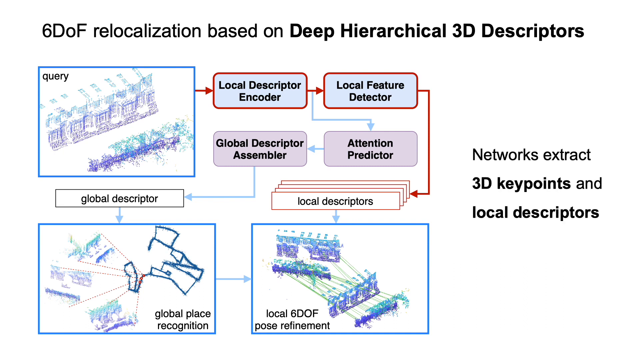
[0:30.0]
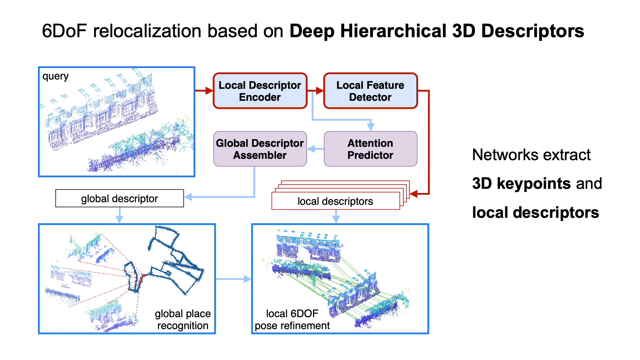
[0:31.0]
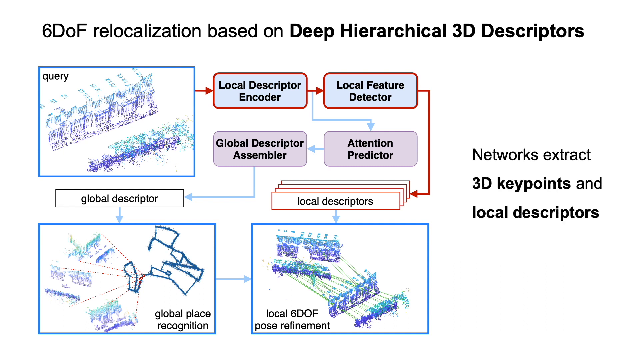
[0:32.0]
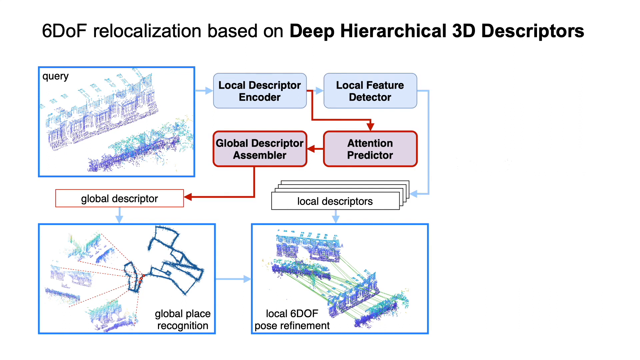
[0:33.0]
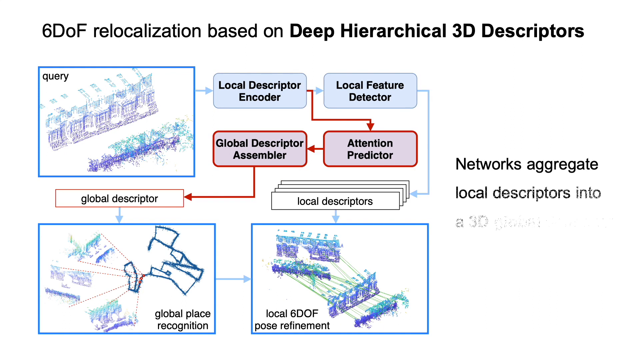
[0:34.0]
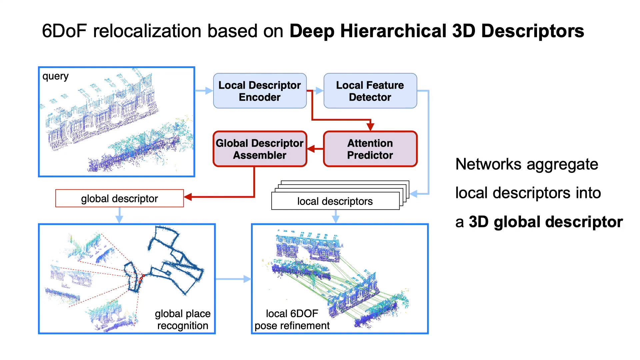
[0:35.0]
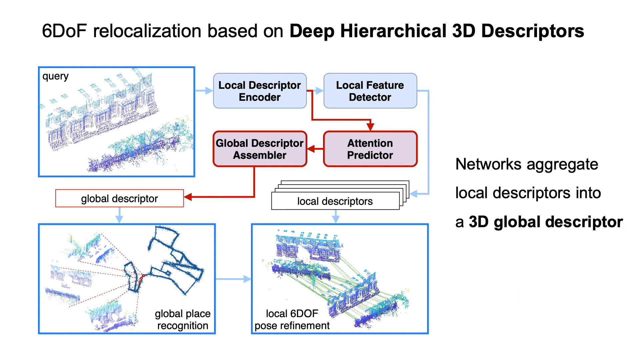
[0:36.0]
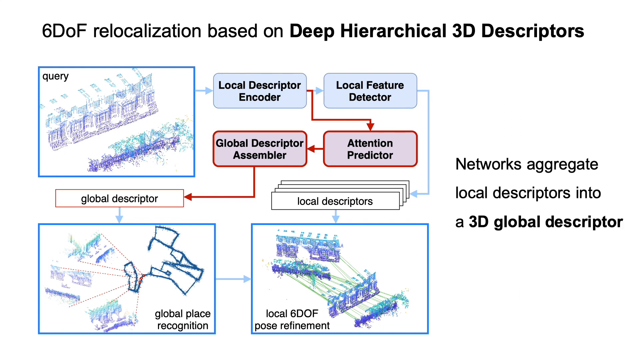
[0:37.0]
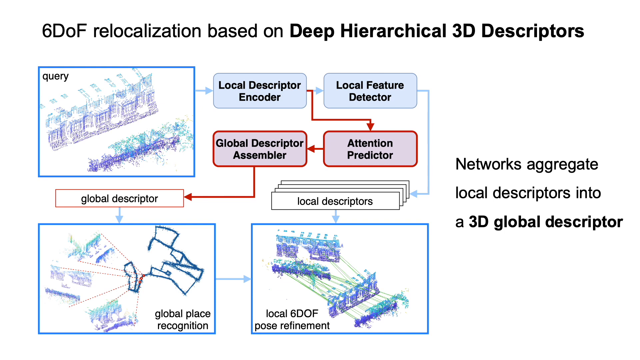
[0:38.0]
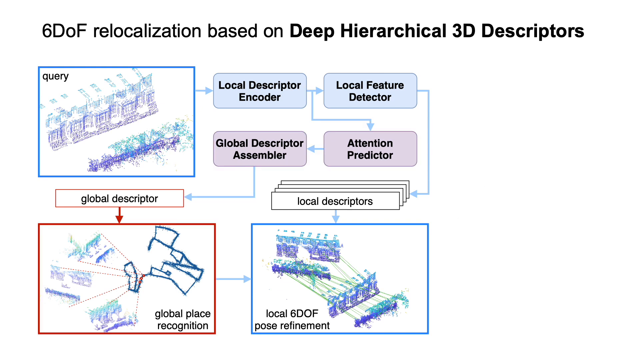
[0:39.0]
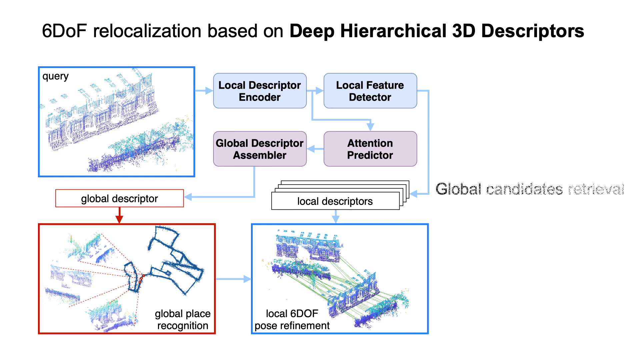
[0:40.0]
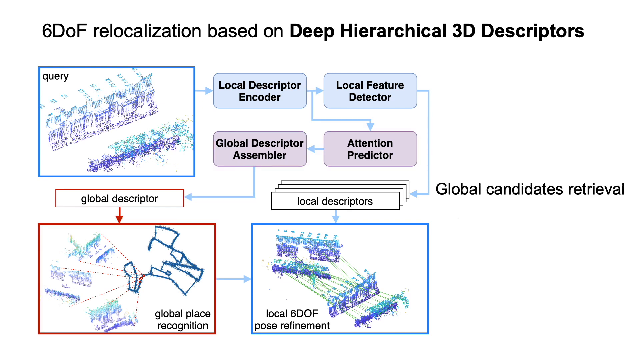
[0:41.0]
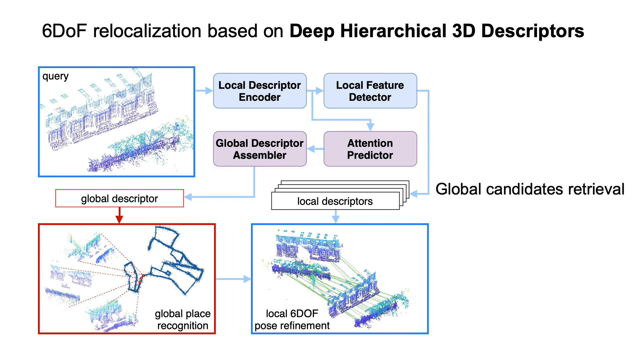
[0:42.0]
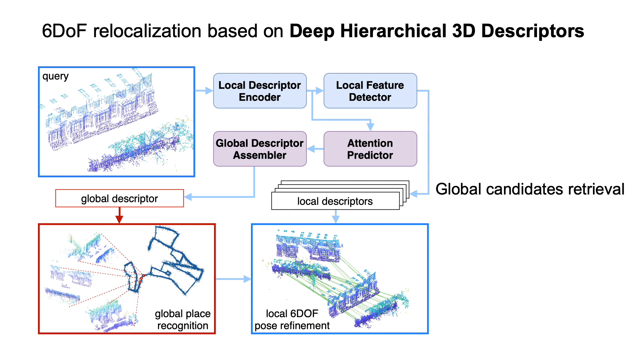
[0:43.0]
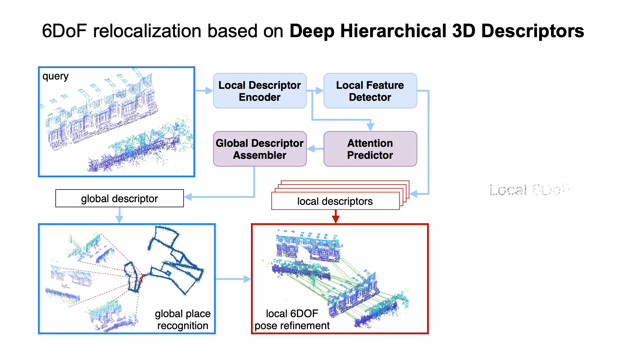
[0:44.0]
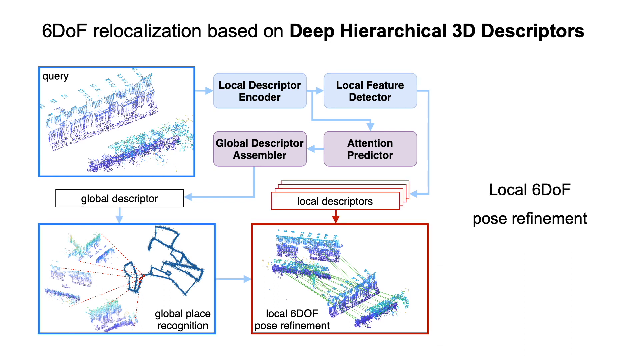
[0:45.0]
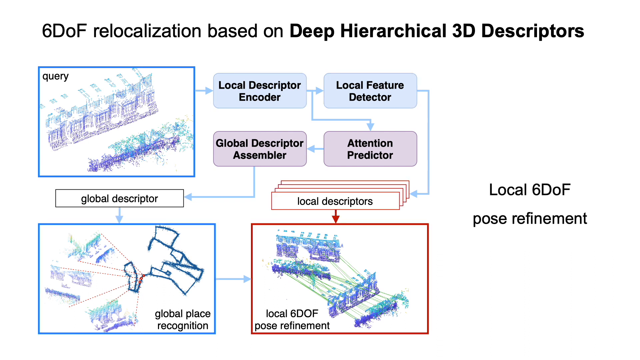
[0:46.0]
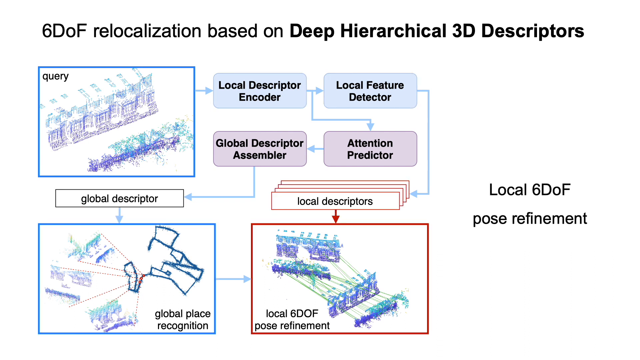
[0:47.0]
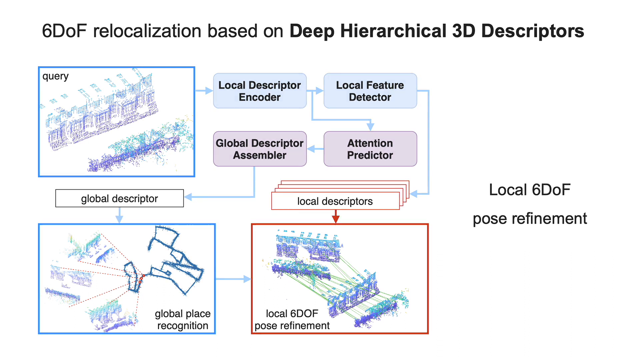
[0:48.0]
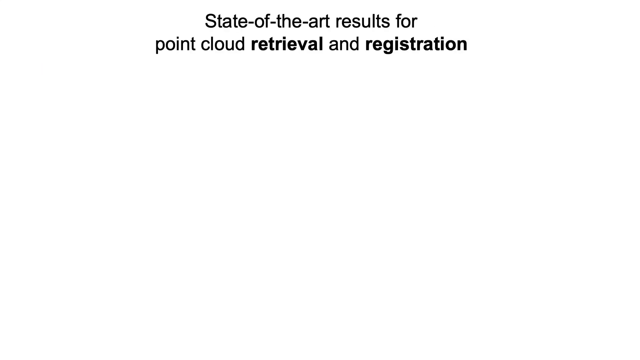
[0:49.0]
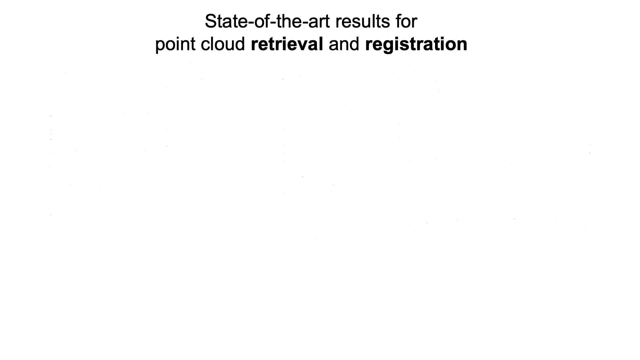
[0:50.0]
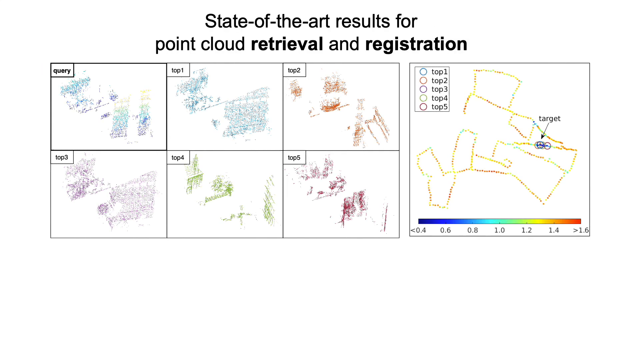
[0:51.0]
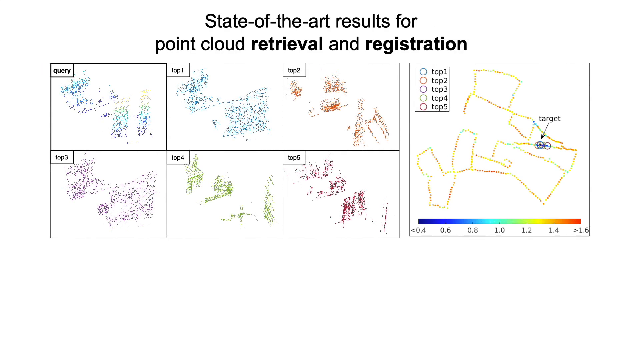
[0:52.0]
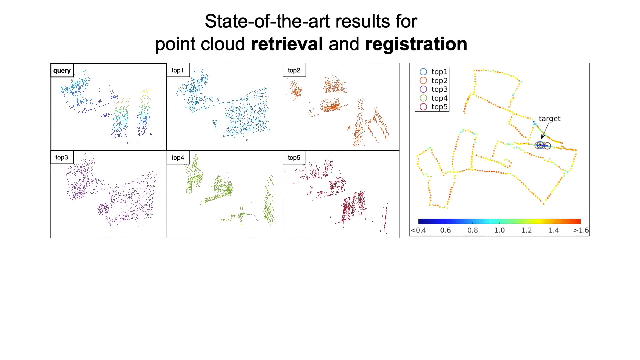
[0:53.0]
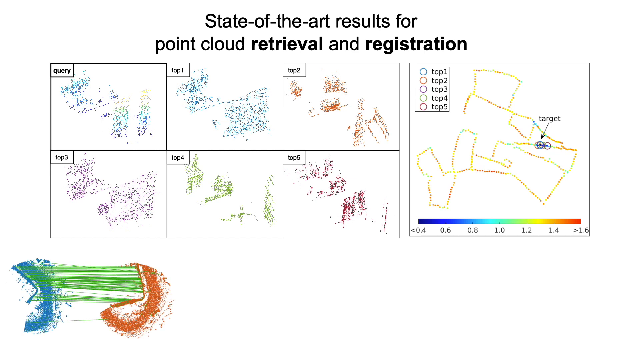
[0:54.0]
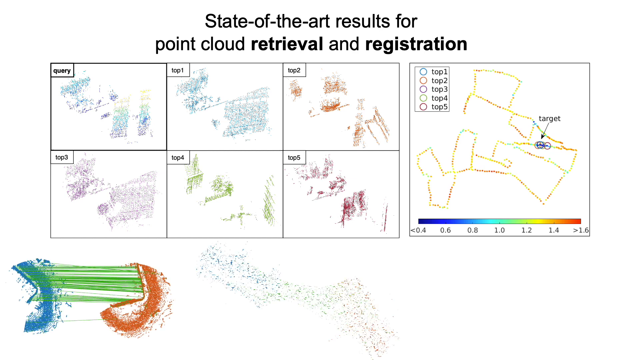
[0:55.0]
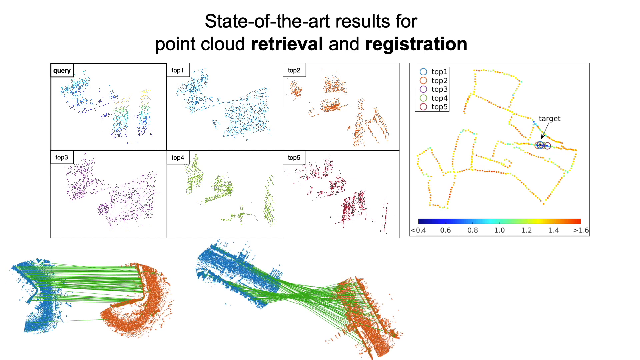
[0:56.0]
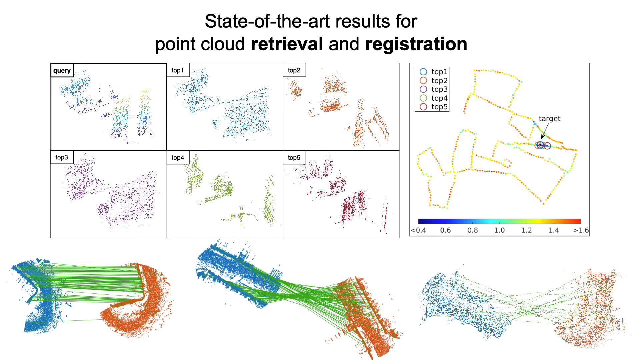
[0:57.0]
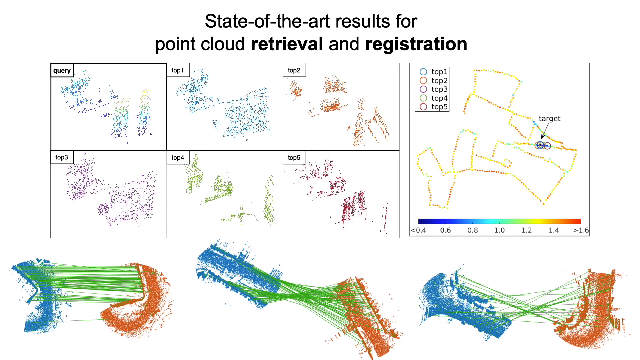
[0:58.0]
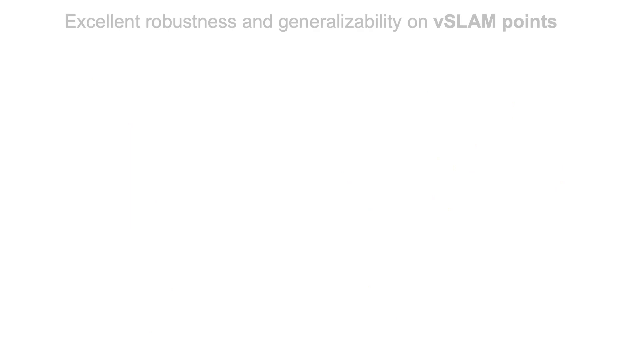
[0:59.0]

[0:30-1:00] The diagrams of 6DOF relocalization based on deep hierarchical 3D descriptors continue. A blue query box showing a diagram of a building has a red arrow to a local descriptor box, which has a red arrow to a local feature detector box; that box has a red arrow to a local descriptor box, which has a blue arrow to a final local DOF pose refinement box. The attention predictor box has a blue arrow to the global descriptor assembler box, which has a blue arrow to the global descriptor box, which has a blue arrow to the global place recognition. The explanation on the right-hand side of the screen changes to "networks aggregate local descriptors into a 3D global descriptor," then "Global Candidates Retrieval" and "local 6DOF pose refinement." The screen then changes to a page titled "state of the art results for point cloud retrieval and registration." On the left are six boxes titled "query," "top 1," "top 2," "top 3," "top 4" and "top 5," with various coloured images below them, and a box on the right shows the results of top 1 to top 5. Several coloured images in blue, green and brown then appear at the bottom of the screen. The screen then changes to "excellent robustness and generalizability on V-slam points."